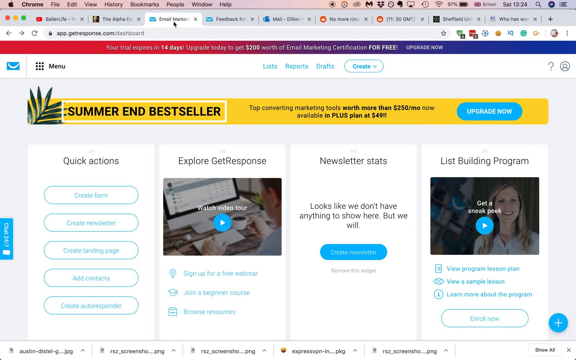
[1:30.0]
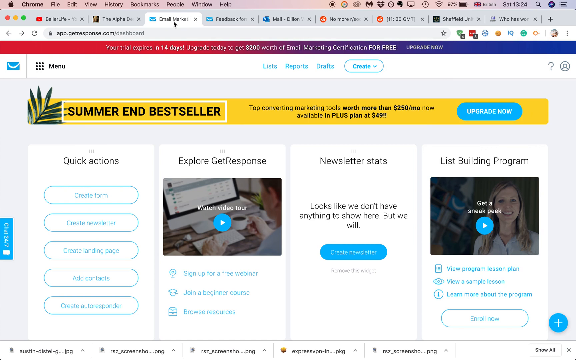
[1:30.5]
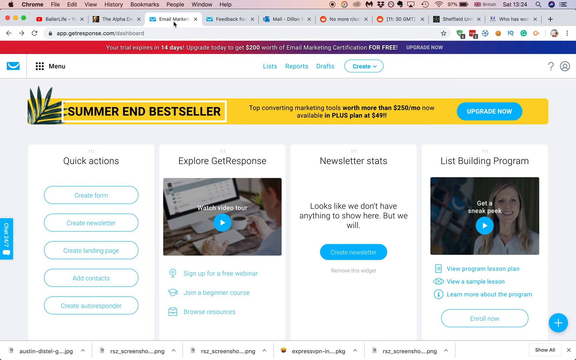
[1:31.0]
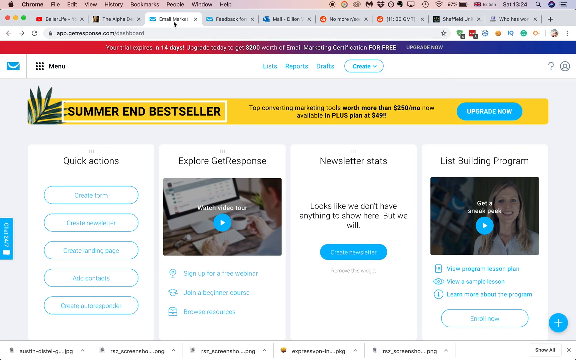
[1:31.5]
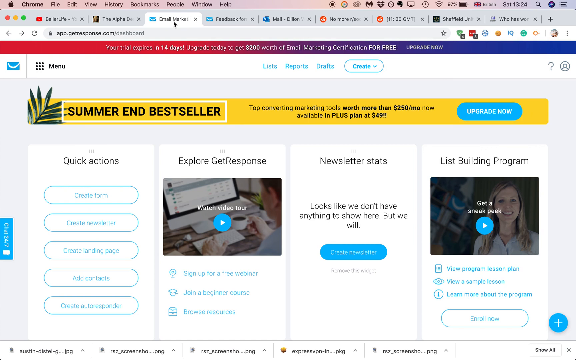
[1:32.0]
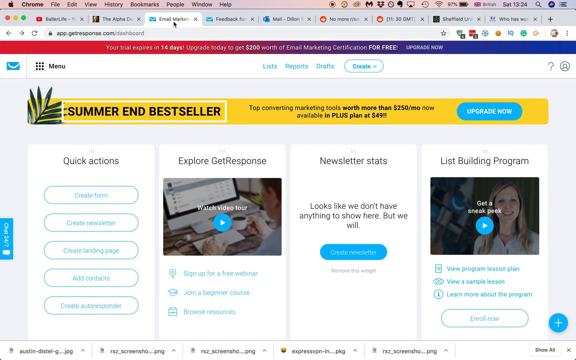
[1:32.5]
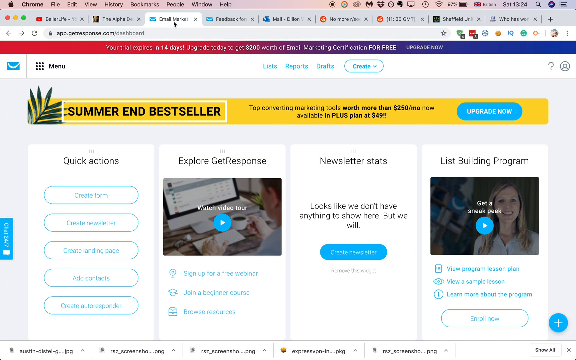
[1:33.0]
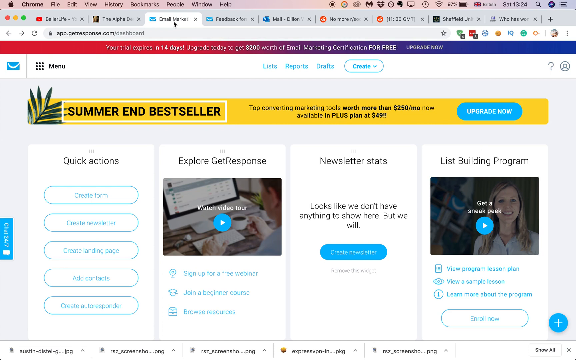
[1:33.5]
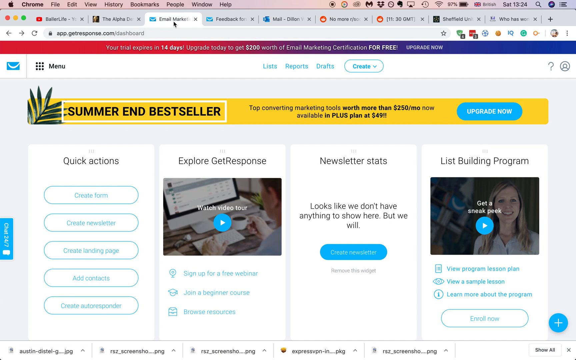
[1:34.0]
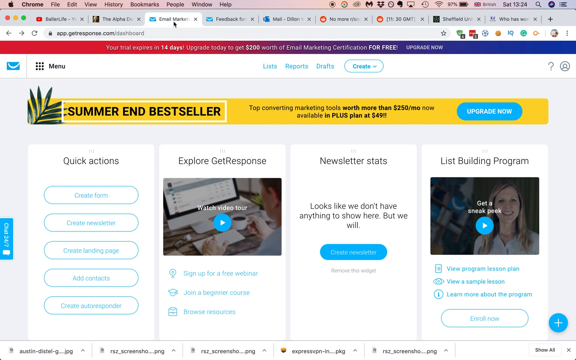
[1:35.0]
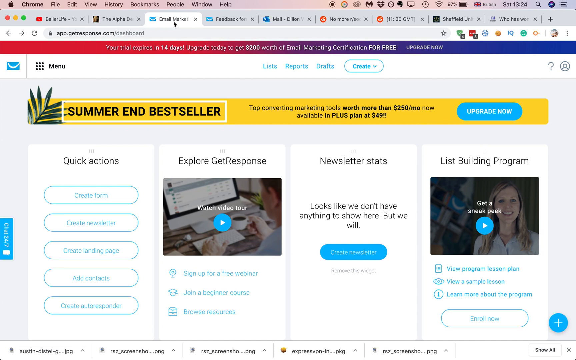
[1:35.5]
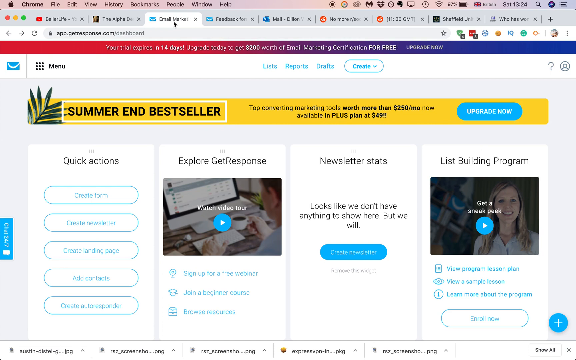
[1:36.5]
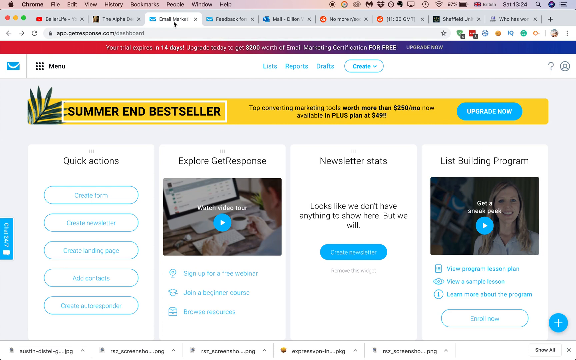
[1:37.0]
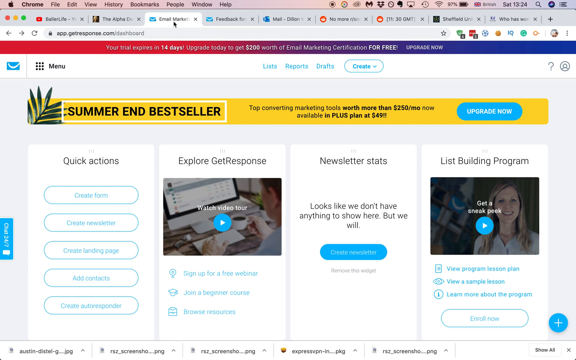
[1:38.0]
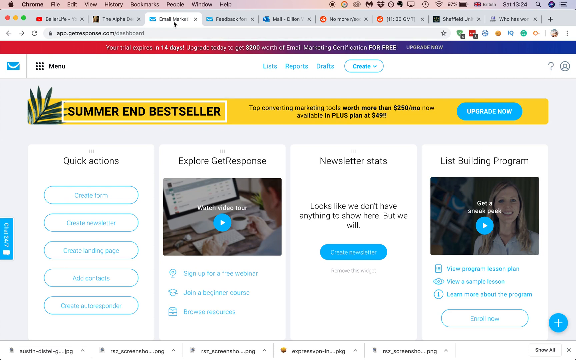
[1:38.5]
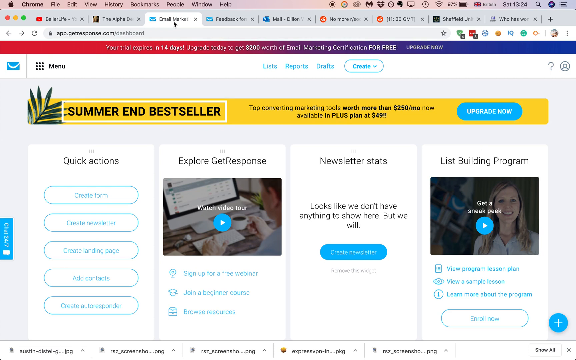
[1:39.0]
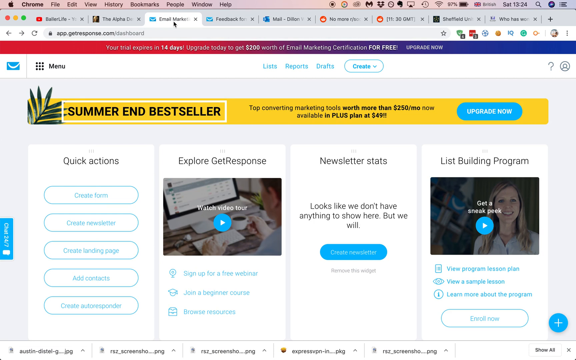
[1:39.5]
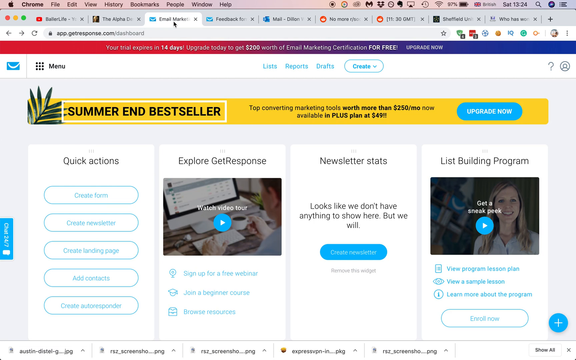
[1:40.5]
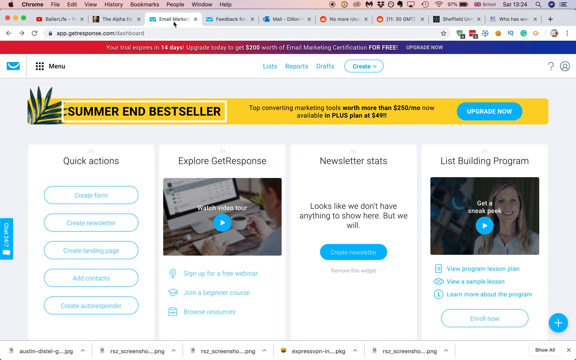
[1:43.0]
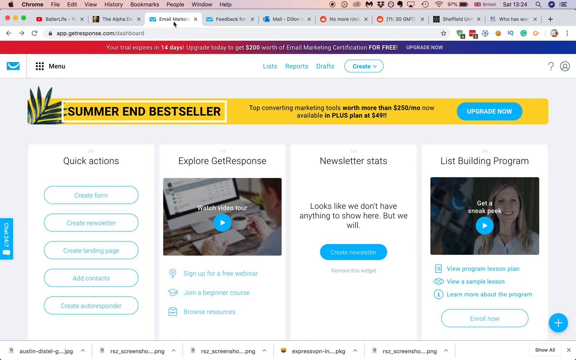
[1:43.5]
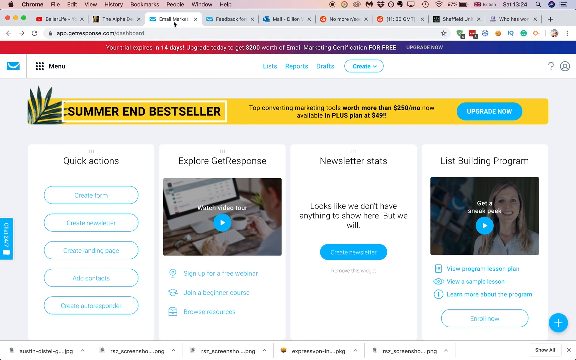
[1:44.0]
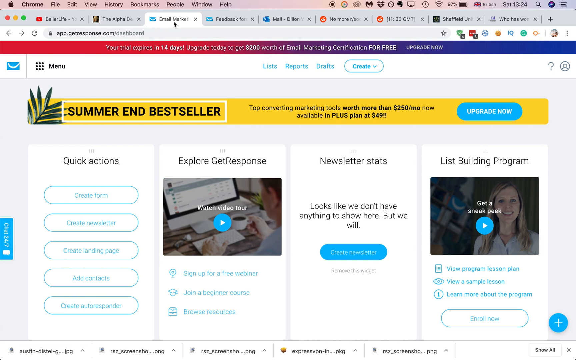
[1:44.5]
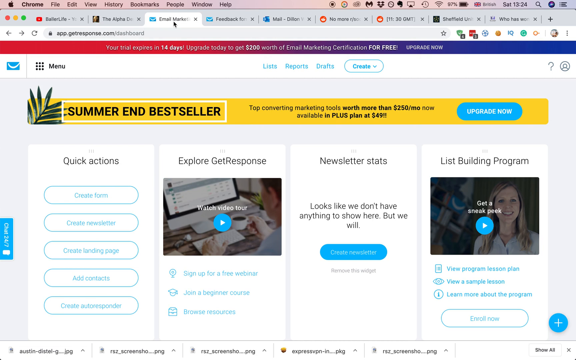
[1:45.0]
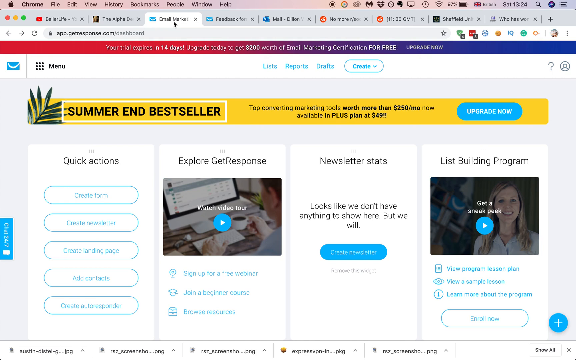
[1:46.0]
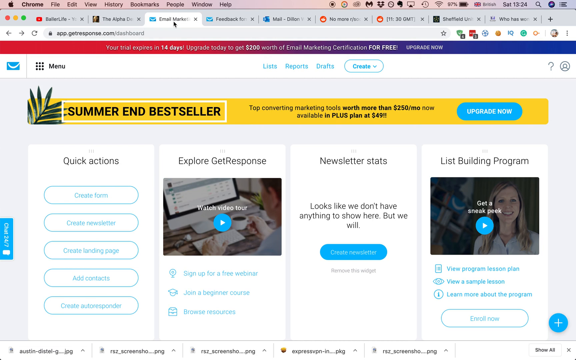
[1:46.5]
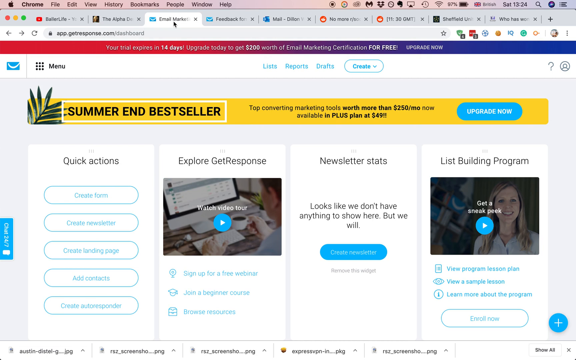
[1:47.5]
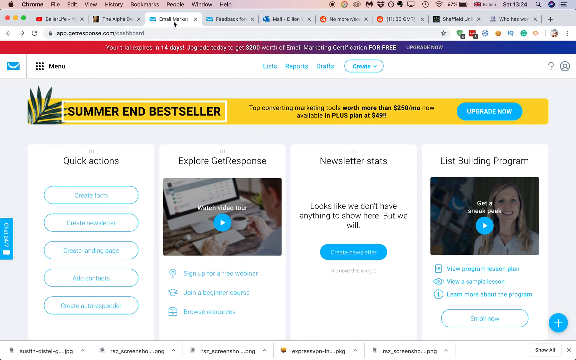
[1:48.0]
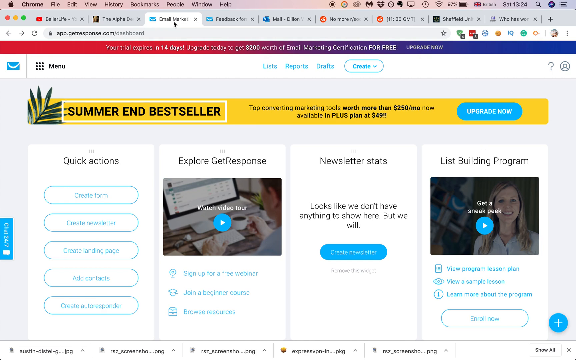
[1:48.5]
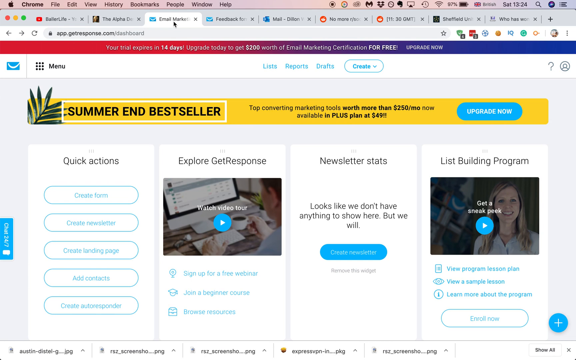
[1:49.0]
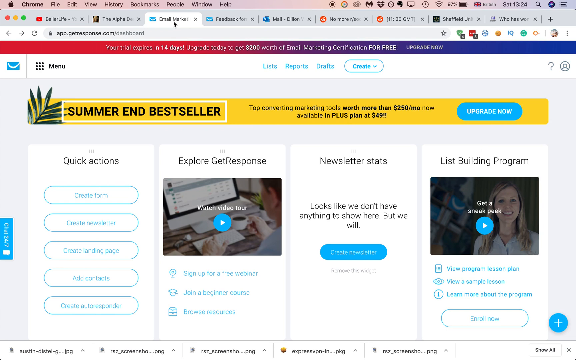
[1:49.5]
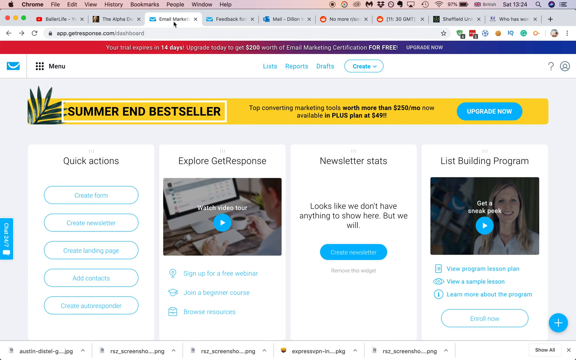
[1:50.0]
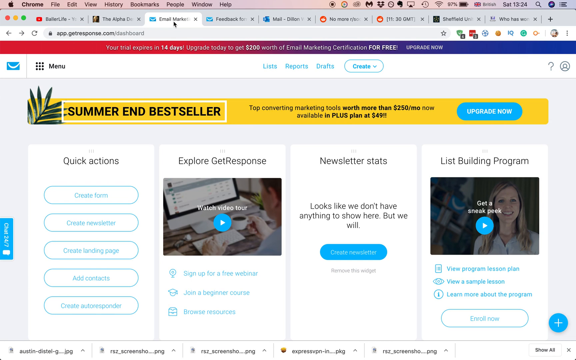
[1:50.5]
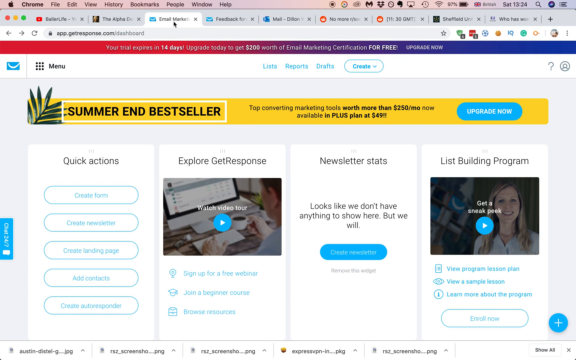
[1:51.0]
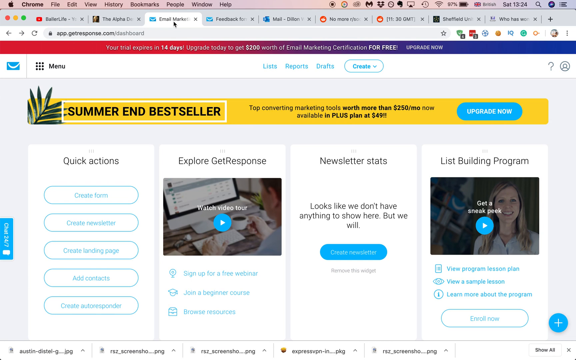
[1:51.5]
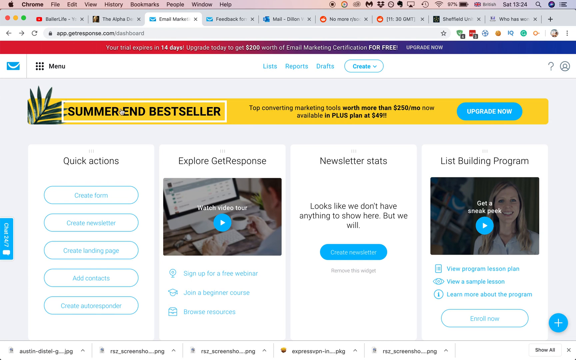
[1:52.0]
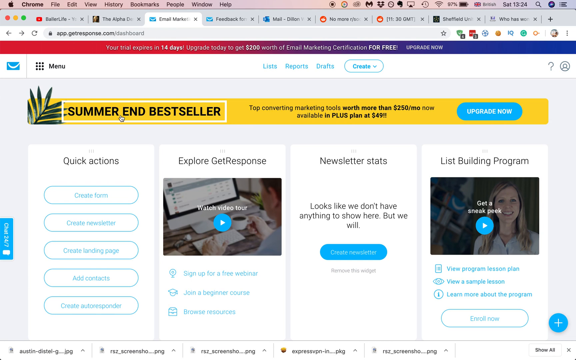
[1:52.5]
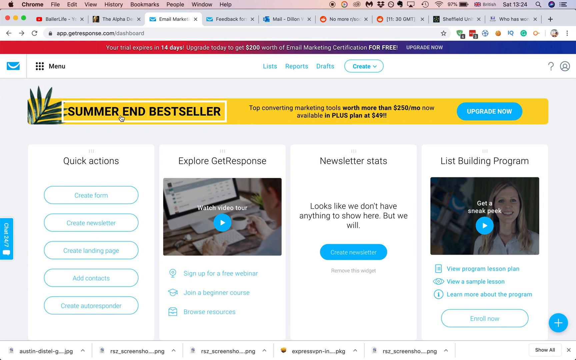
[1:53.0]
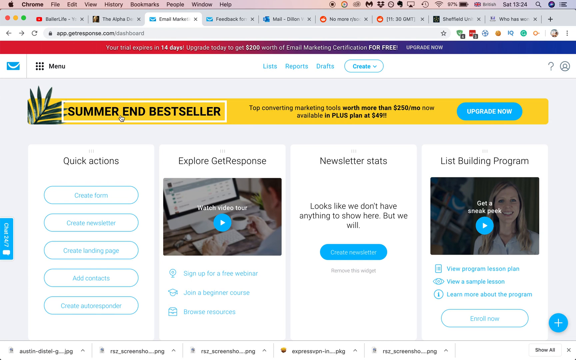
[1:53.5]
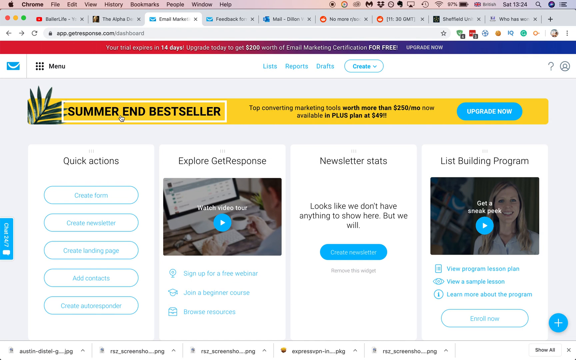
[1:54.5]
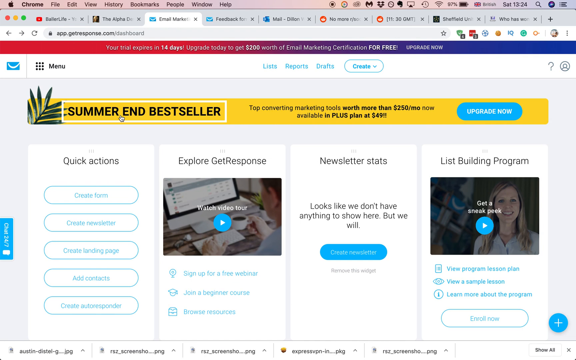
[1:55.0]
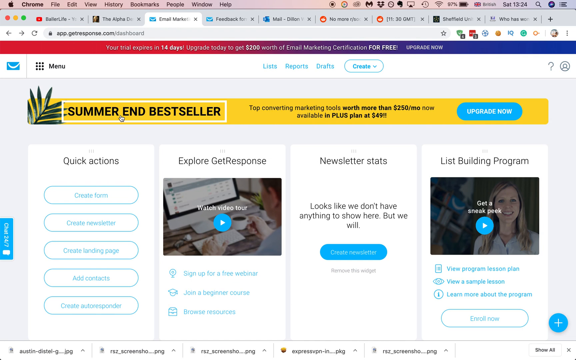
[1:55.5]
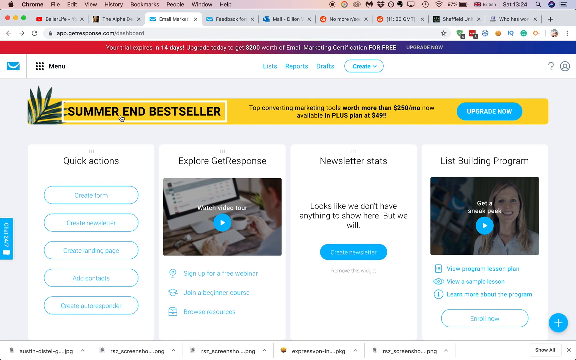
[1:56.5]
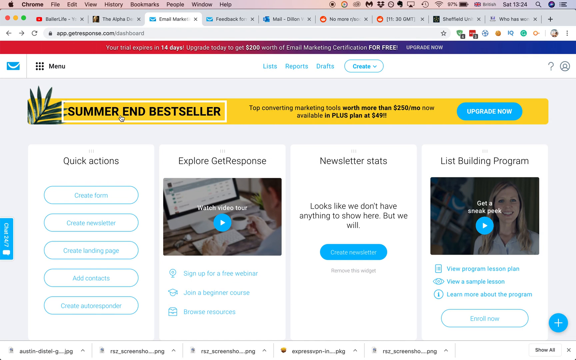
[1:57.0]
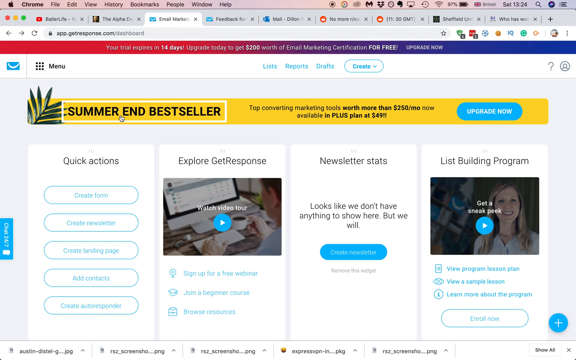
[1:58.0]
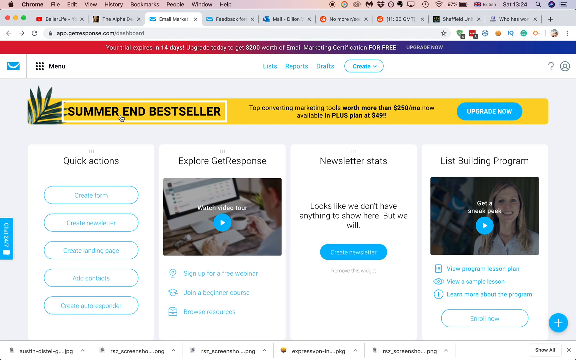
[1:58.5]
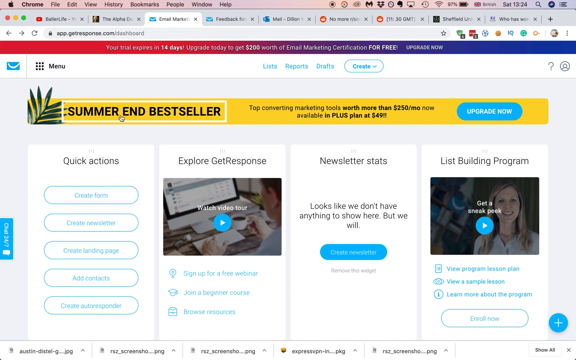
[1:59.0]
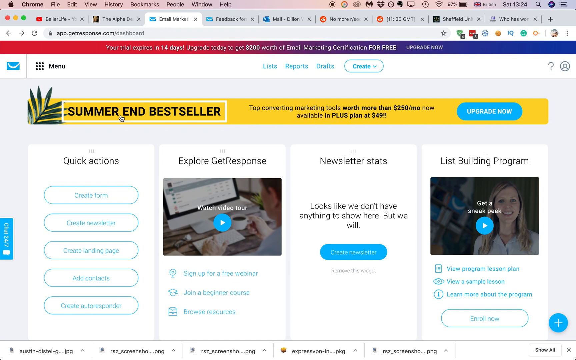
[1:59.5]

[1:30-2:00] On the original page, the user's cursor stays still on the original website's tab after clicking on it, and there is no movement for a moment. The user then moves the cursor over the yellow header that says "Top Converting Marketing Tools worth more than $250/mo now available in PLUS plan at $49!!". The cursor rests on the words of the header that read "SUMMER END BESTSELLER", which have a thin white rectangular border around them; the letters are bold and large. Again there is no movement: the screen and cursor stay still, and the four panels on the page and all of their options stand still. Many tabs are open on the screen, but the user does not click any of them or any of the options on the website.